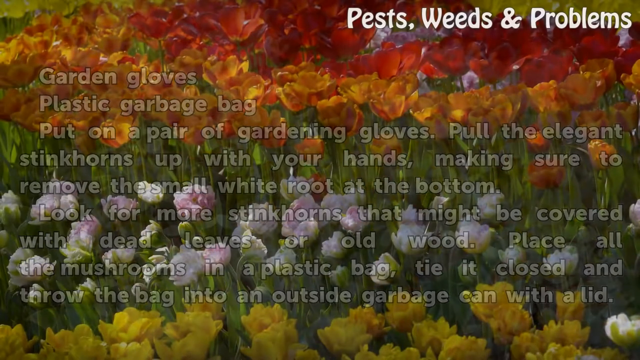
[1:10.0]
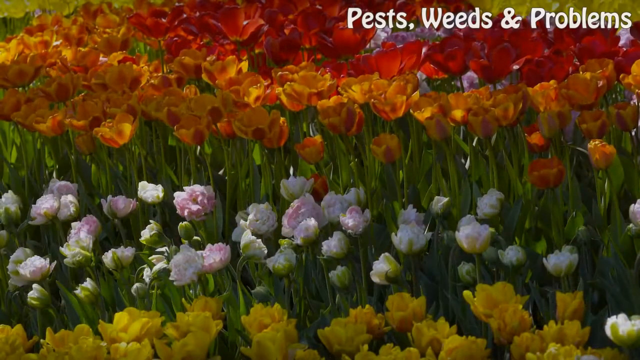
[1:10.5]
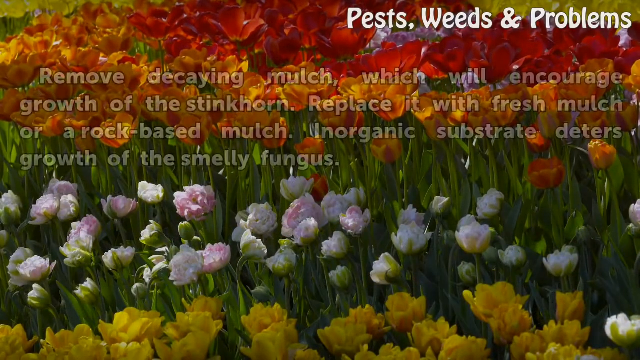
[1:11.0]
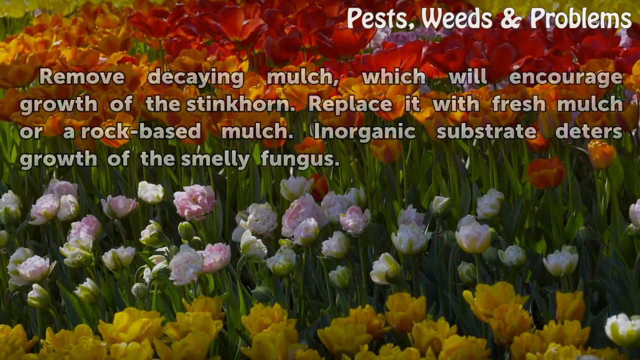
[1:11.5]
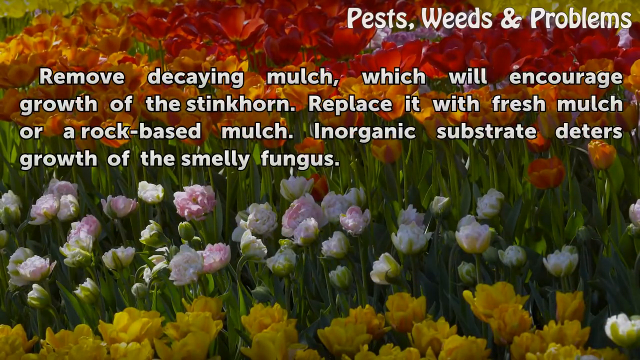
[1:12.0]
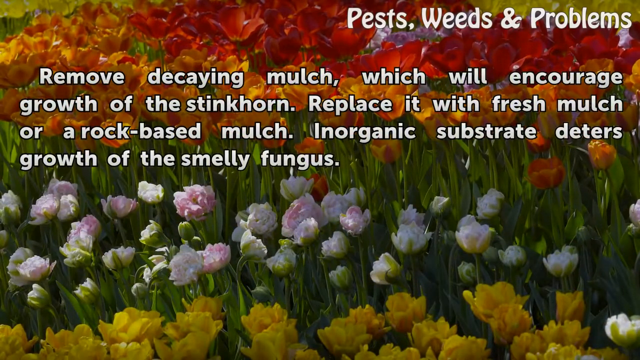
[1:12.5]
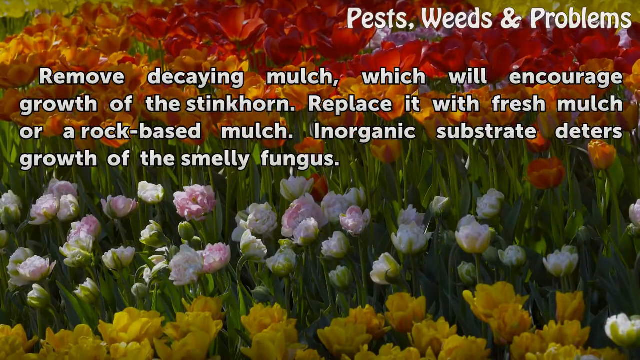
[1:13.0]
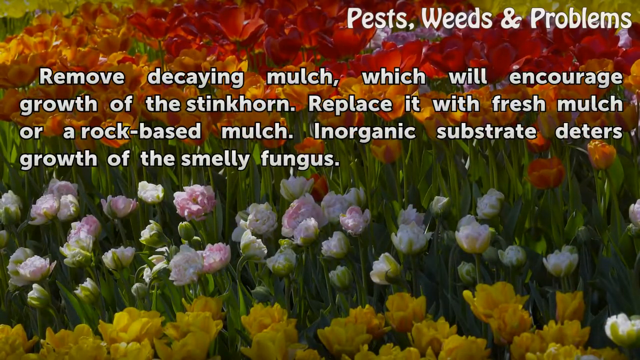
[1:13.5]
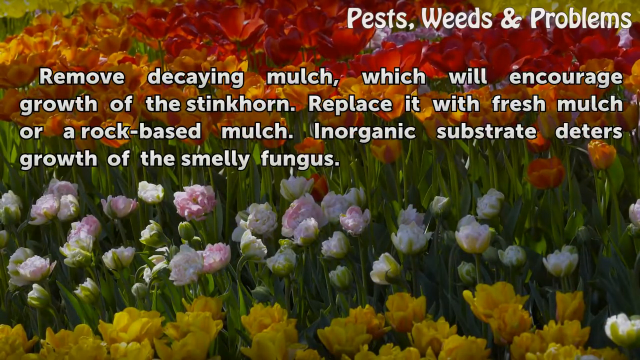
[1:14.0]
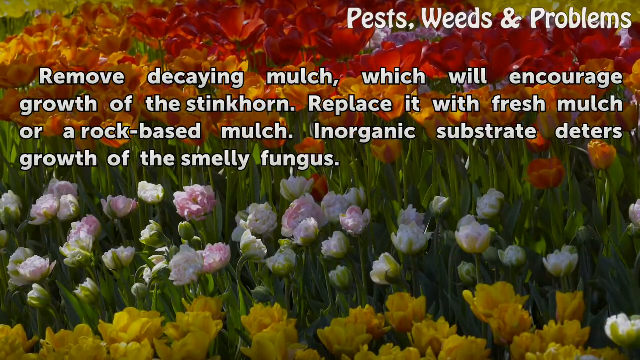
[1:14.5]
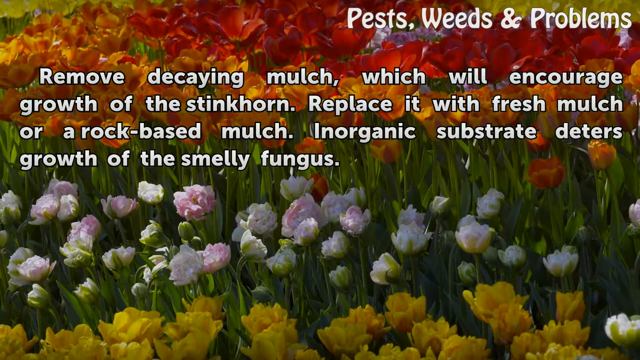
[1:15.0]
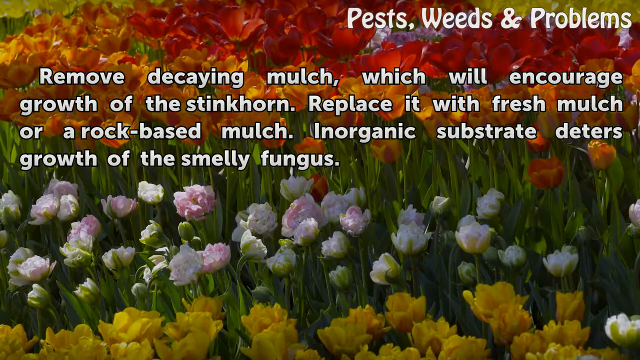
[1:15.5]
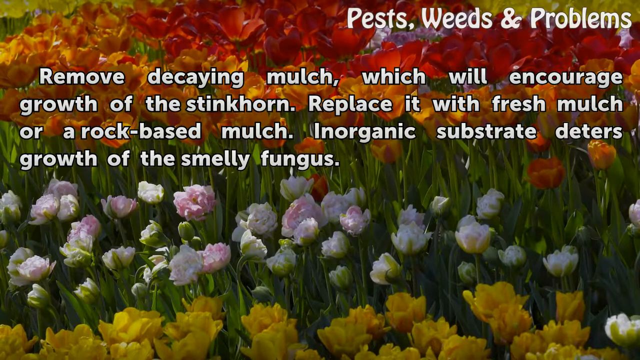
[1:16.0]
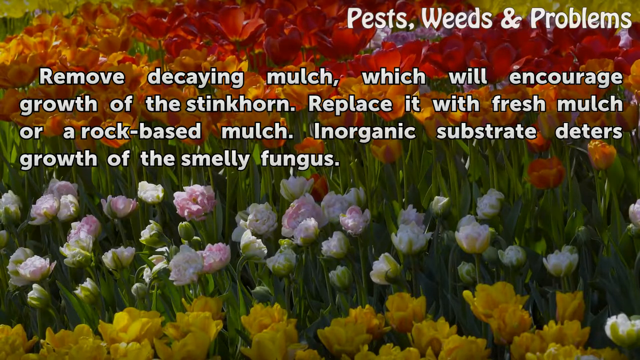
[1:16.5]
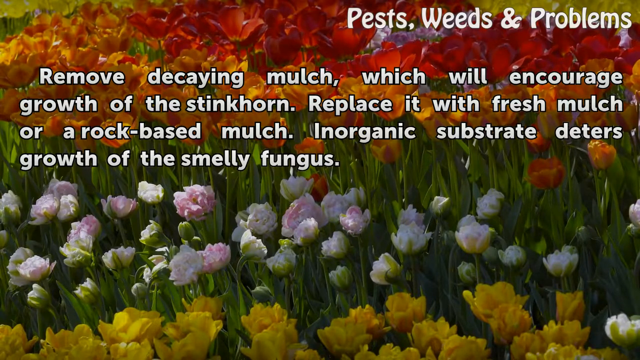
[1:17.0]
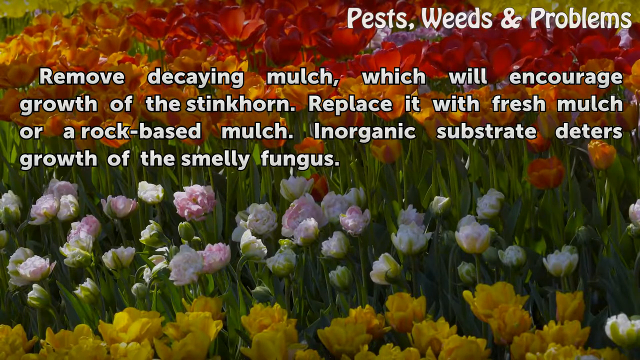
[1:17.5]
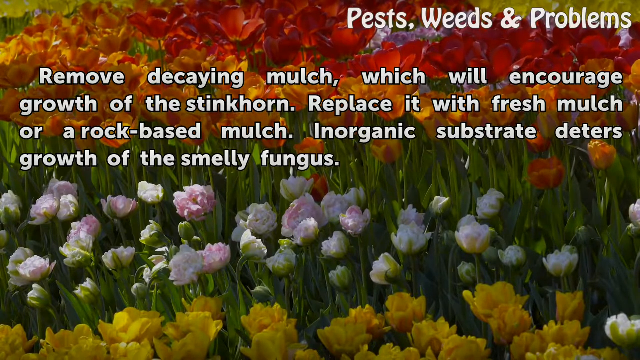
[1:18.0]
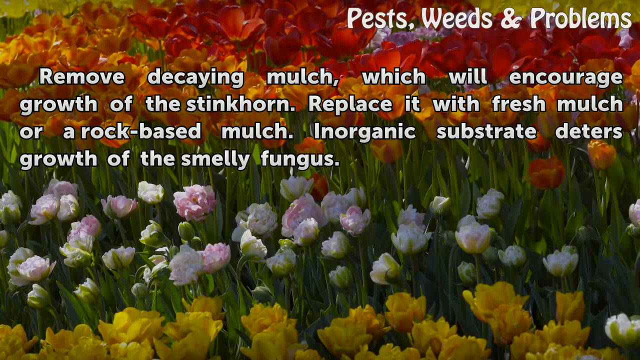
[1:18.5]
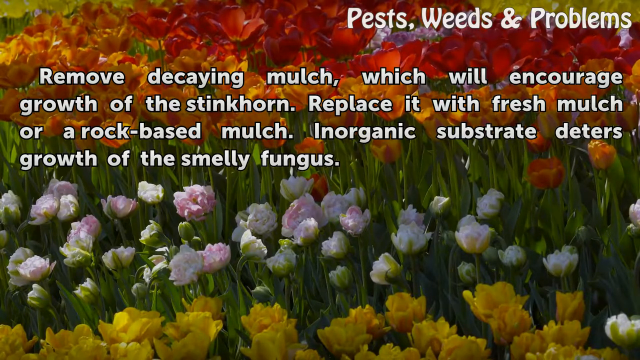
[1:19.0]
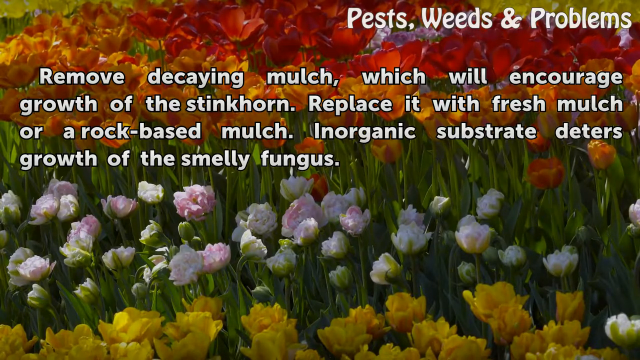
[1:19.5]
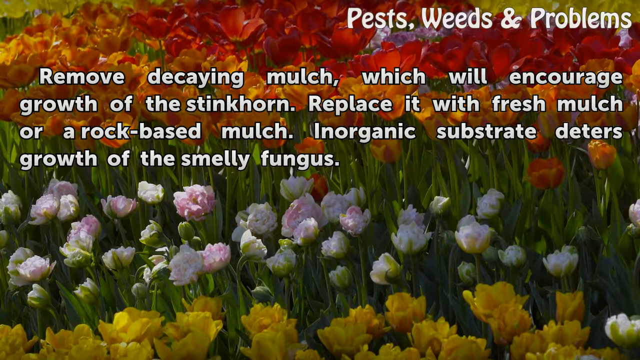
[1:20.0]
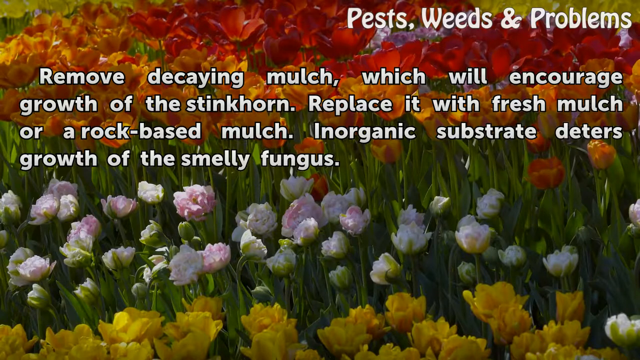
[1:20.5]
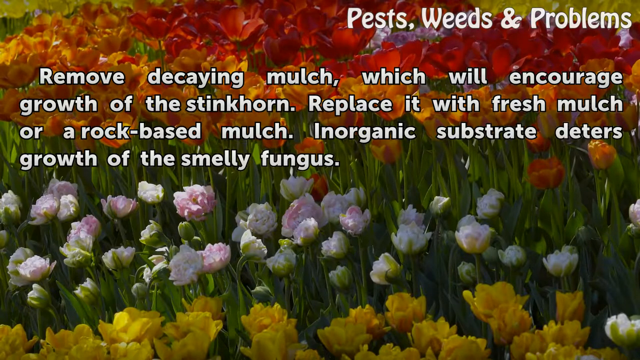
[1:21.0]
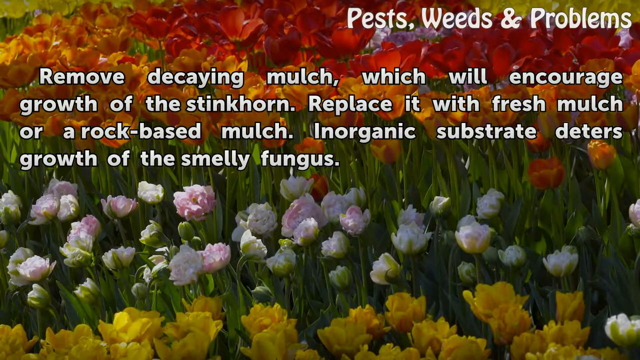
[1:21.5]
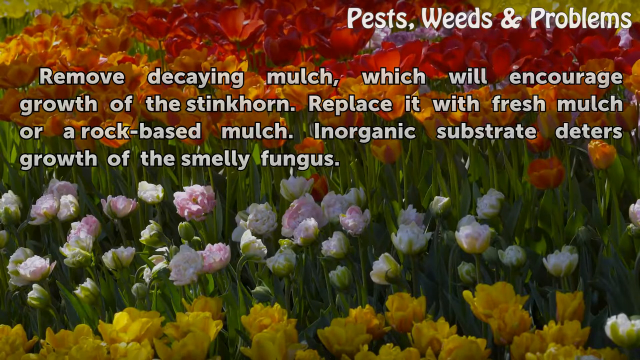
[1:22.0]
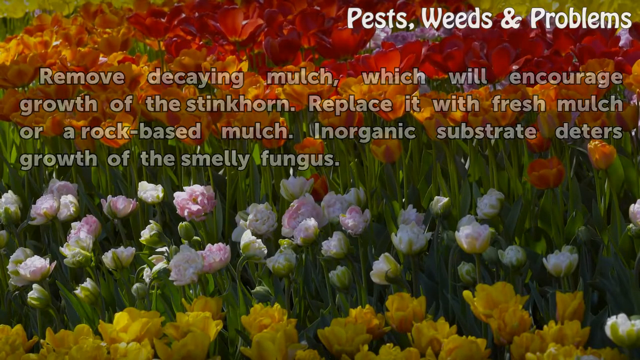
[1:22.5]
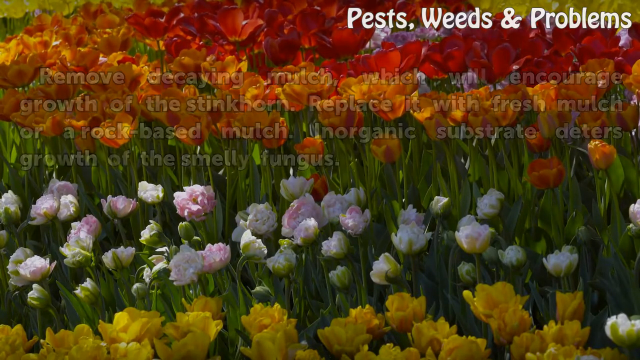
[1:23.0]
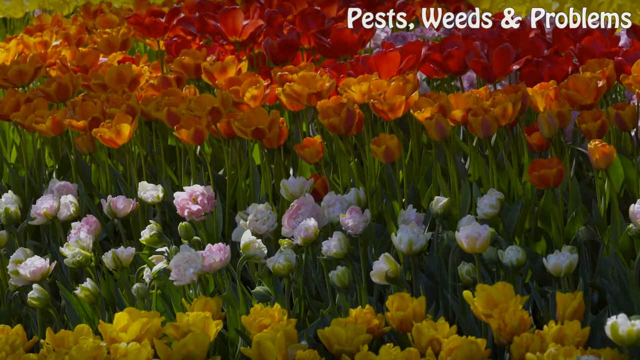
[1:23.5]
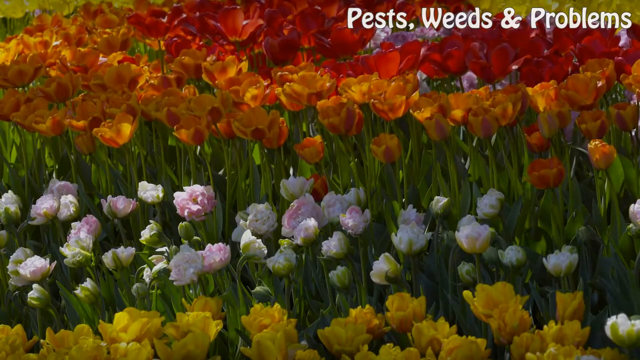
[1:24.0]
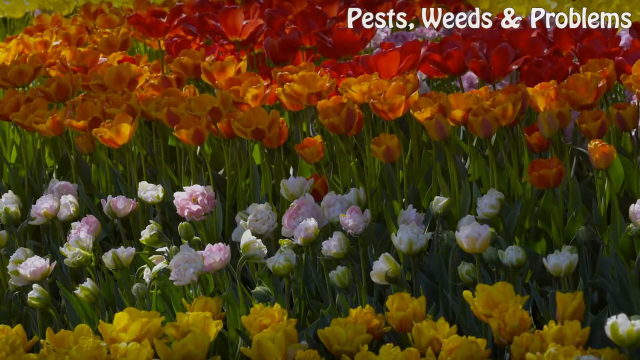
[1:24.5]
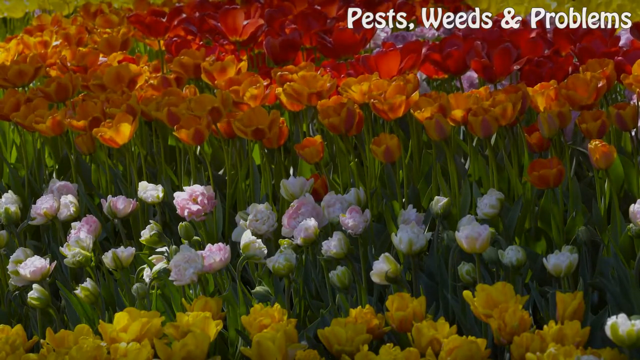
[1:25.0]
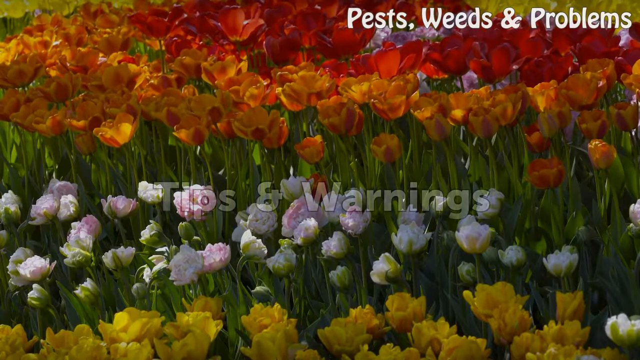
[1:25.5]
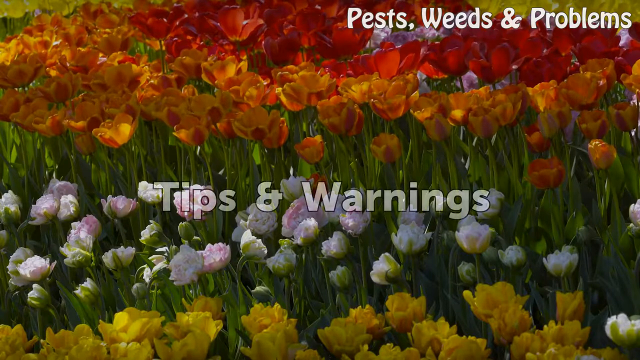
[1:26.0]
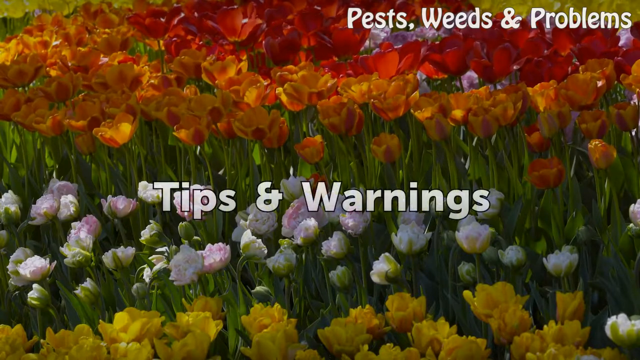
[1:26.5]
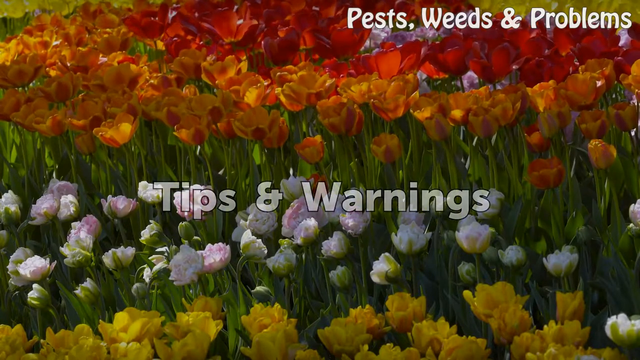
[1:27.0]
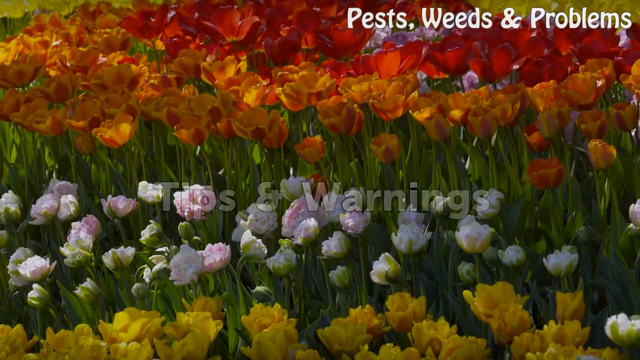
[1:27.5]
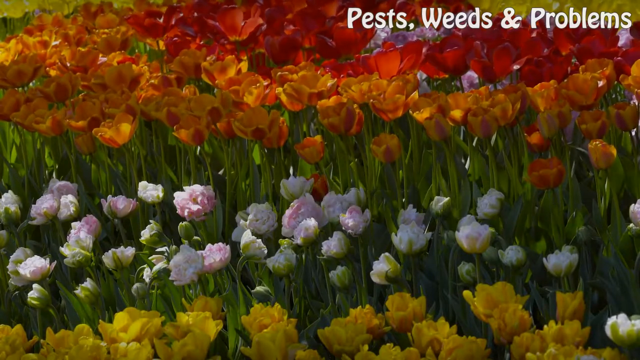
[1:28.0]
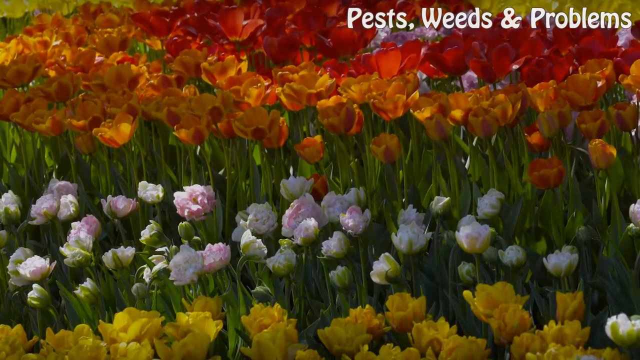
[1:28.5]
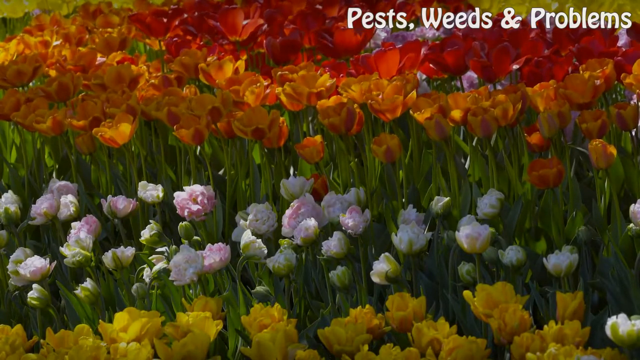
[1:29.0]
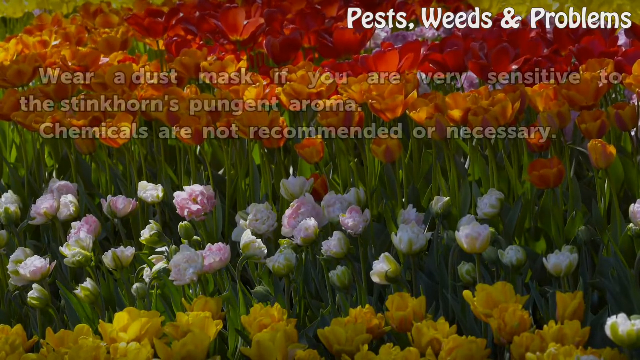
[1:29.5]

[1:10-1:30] Once the instructions fade, the view shows tulips in a field, with yellow and then red in different rows. New white letters appear over the top of the tulips: "remove decaying mulch, which will encourage the growth of the stinkhorn. Replace it with brush mulch or rock-based mulch. Inorganic substrate deters growth of the smelly fungus." When those instructions fade, the words "tips and warnings" pop up in white block lettering over the tulips. They slowly fade, leaving the view of the flowers in the field, which may actually be roses. The first row is yellow, the second row is white, the third is an orange mixture with red, and the fourth row is red. There also seems to be some purple in the background.